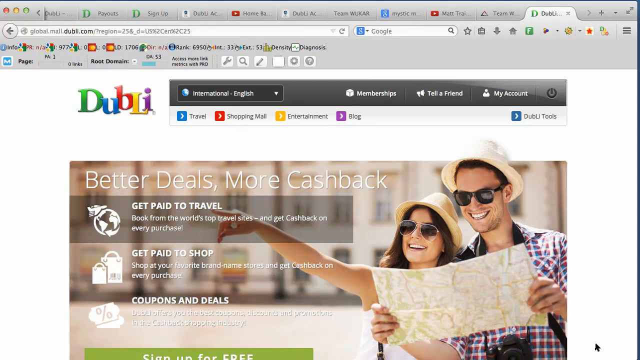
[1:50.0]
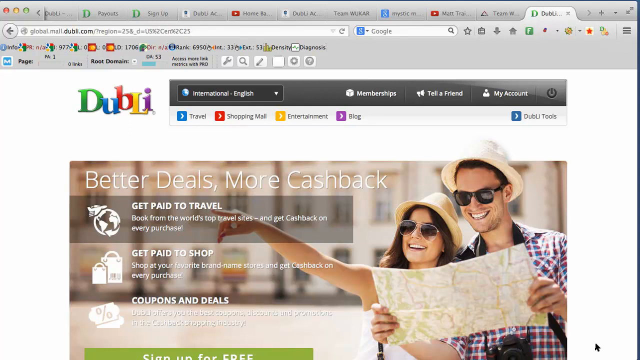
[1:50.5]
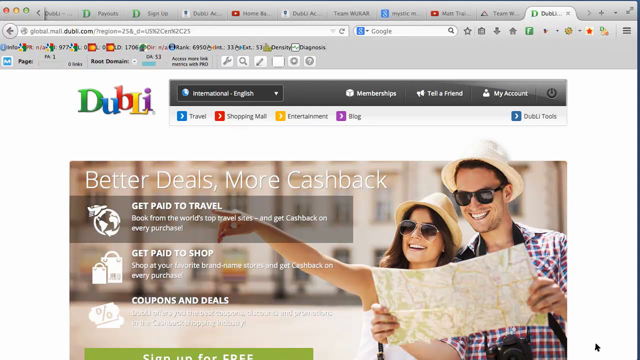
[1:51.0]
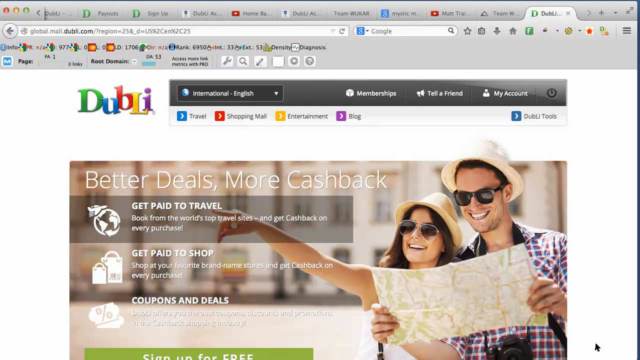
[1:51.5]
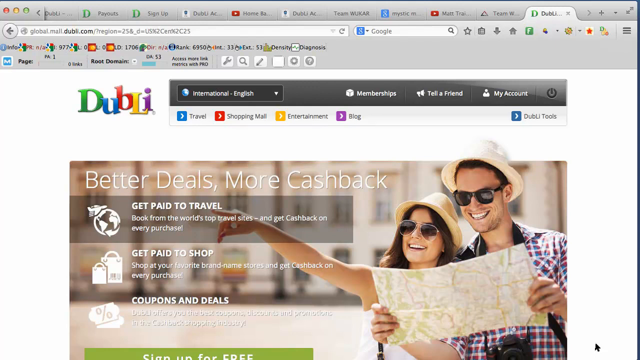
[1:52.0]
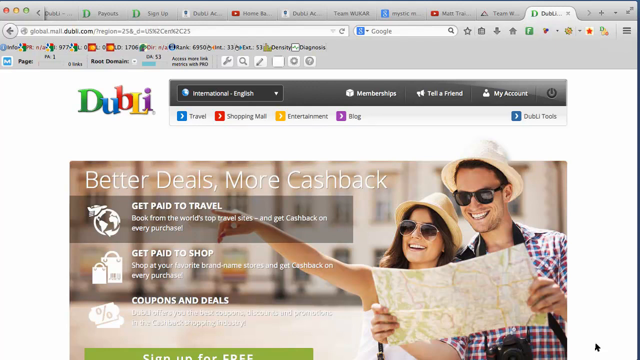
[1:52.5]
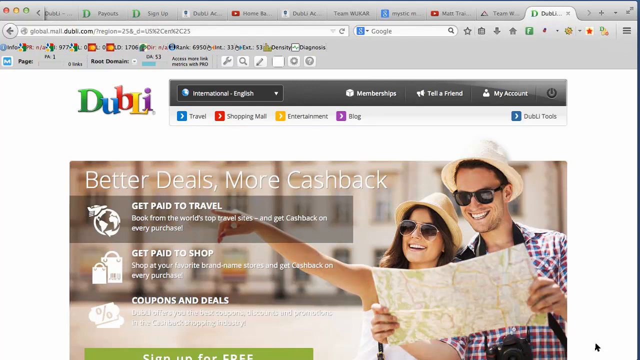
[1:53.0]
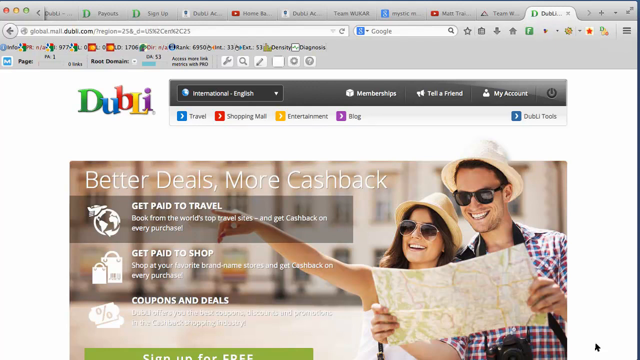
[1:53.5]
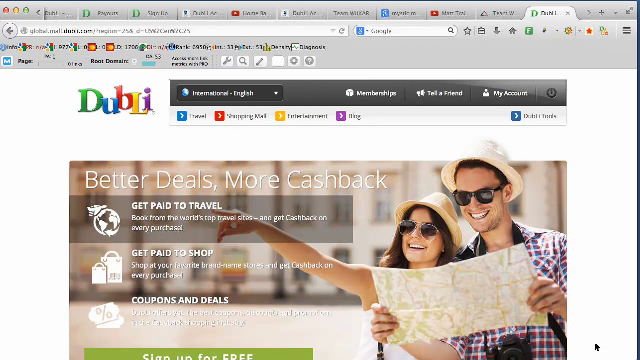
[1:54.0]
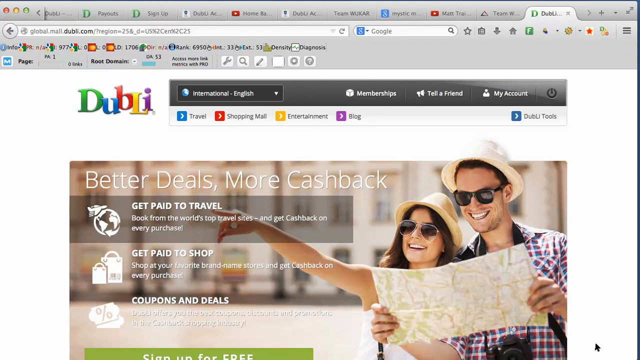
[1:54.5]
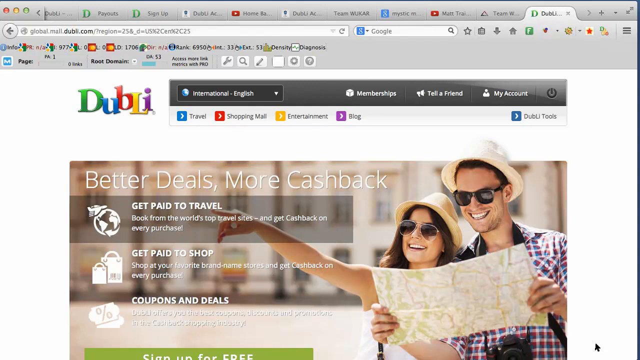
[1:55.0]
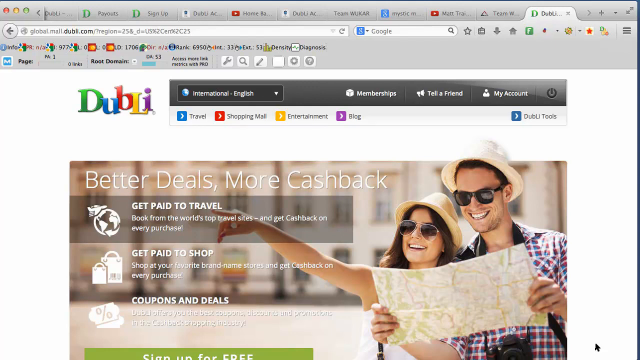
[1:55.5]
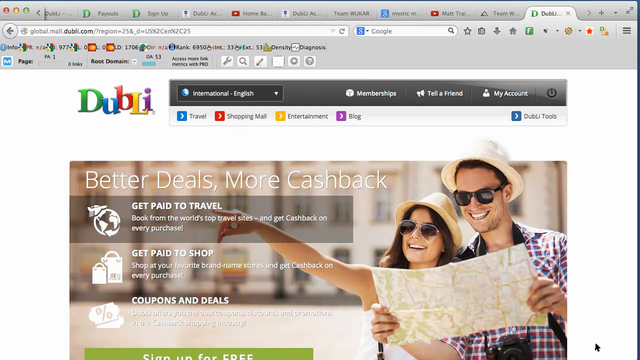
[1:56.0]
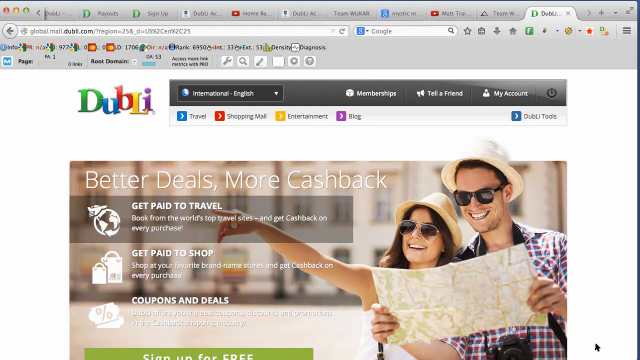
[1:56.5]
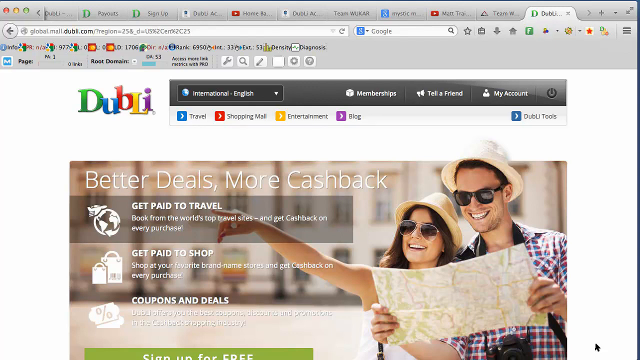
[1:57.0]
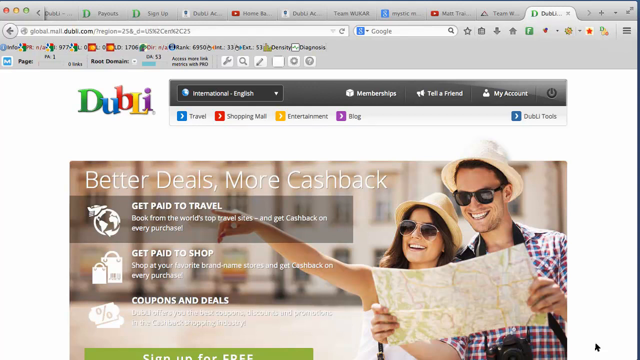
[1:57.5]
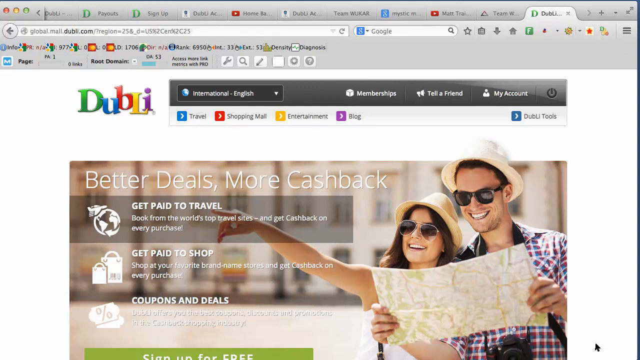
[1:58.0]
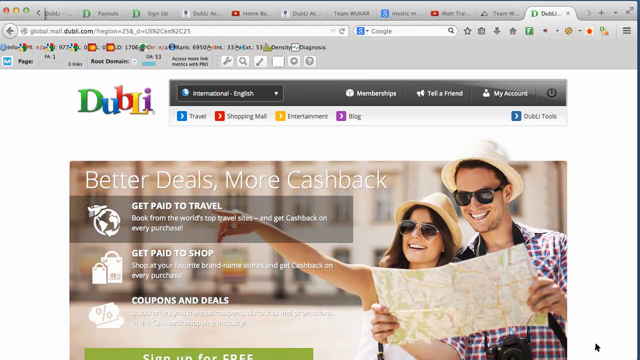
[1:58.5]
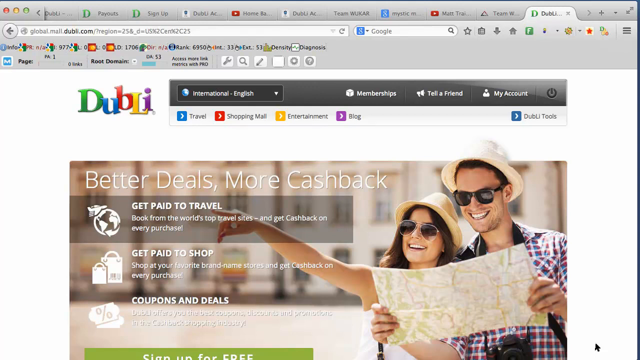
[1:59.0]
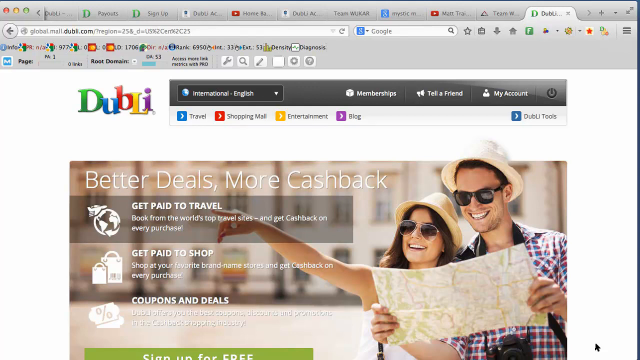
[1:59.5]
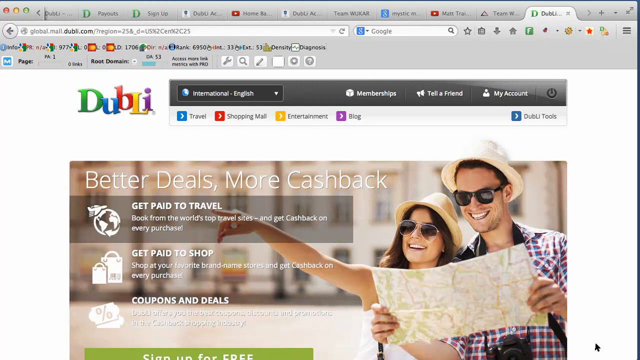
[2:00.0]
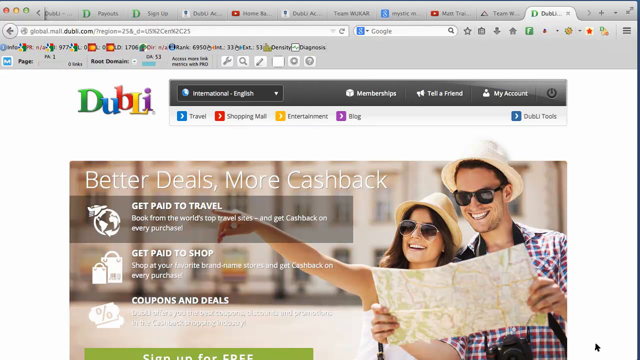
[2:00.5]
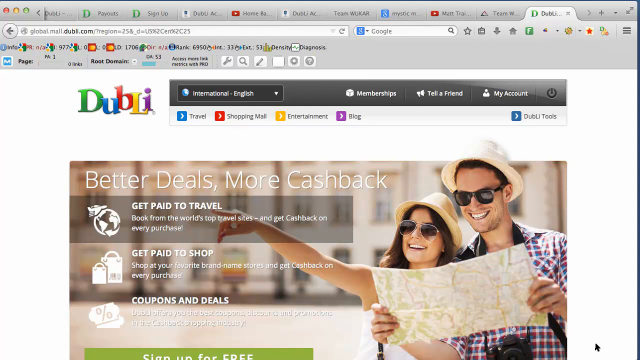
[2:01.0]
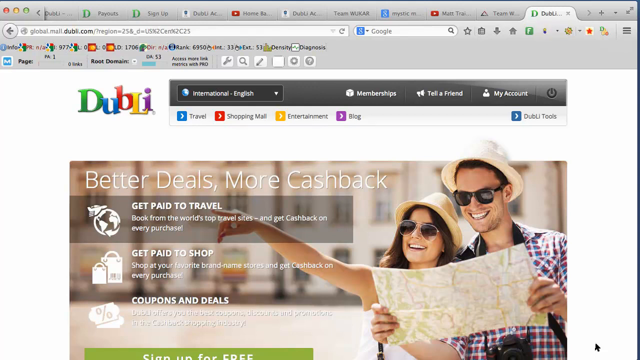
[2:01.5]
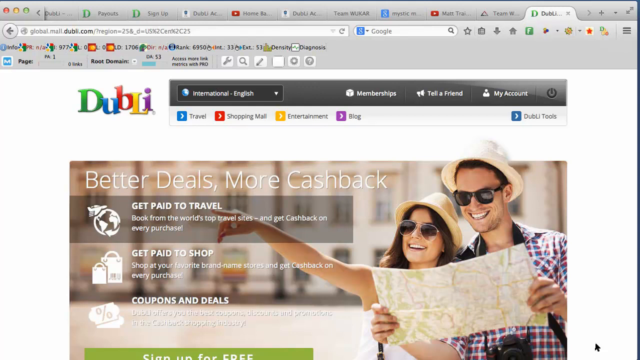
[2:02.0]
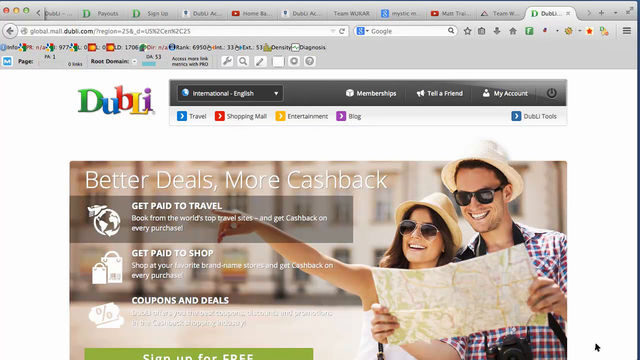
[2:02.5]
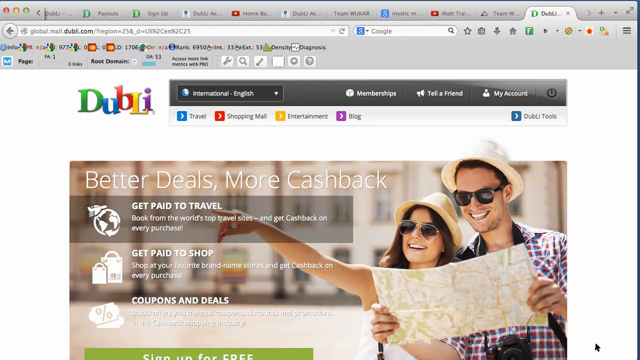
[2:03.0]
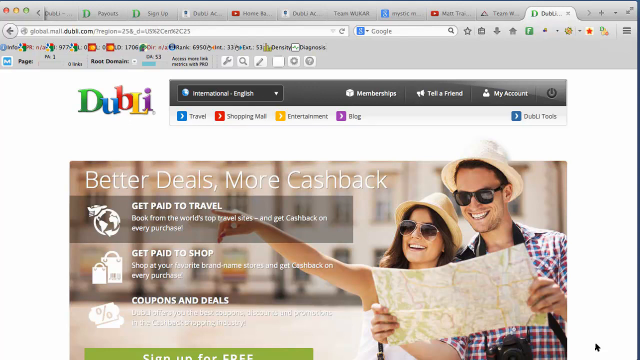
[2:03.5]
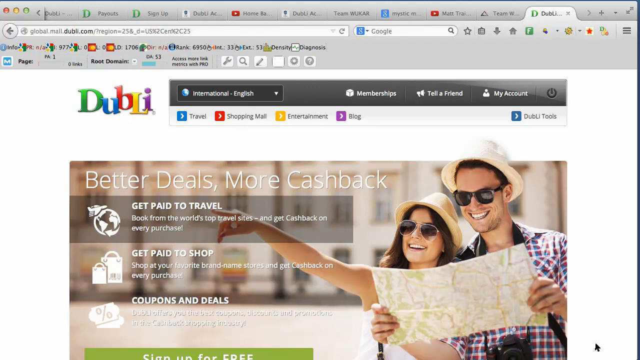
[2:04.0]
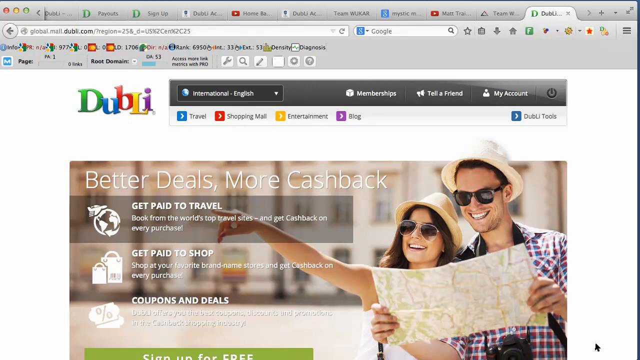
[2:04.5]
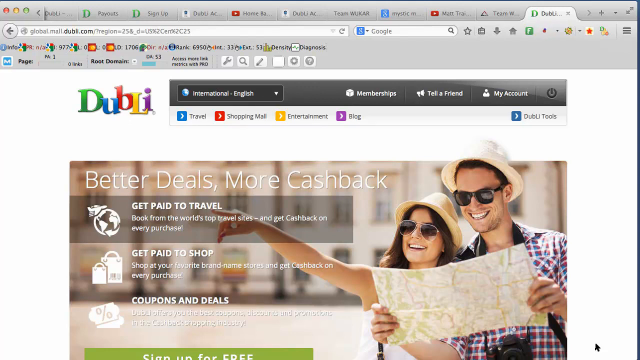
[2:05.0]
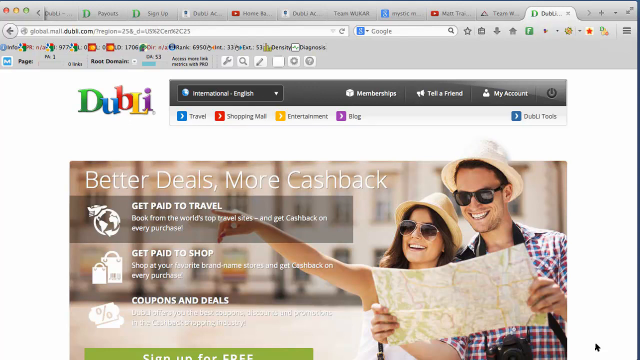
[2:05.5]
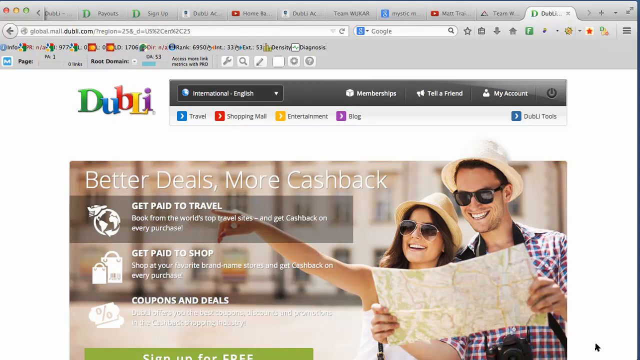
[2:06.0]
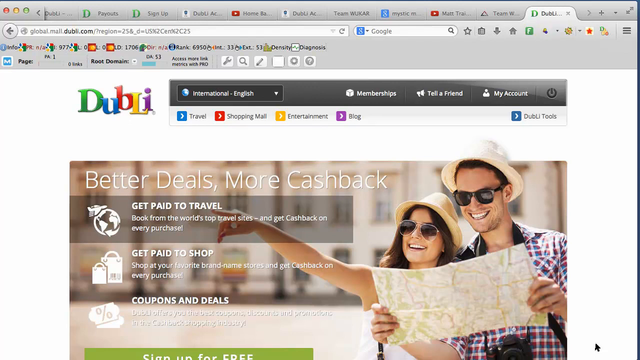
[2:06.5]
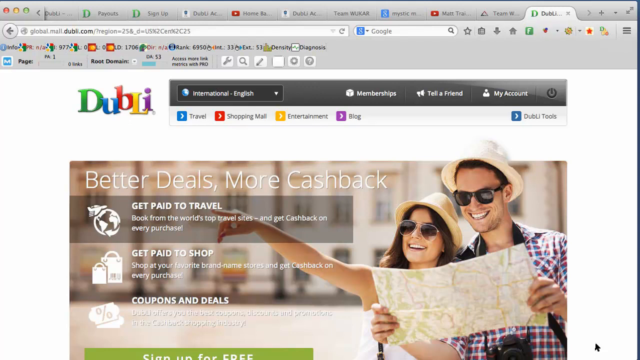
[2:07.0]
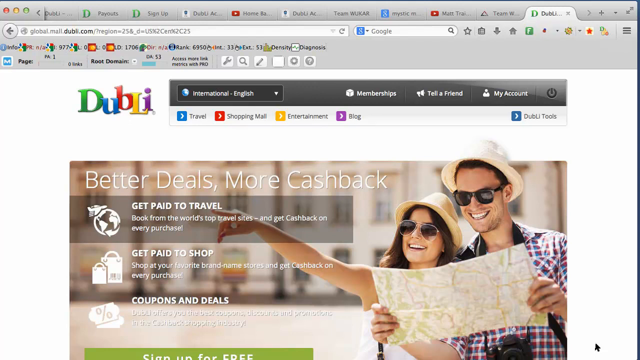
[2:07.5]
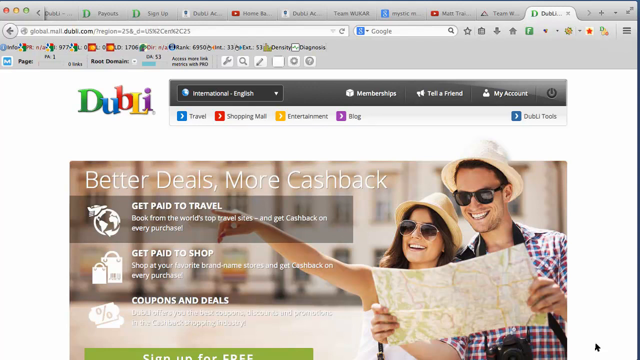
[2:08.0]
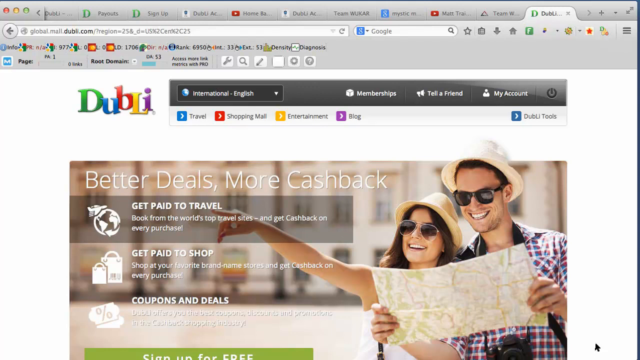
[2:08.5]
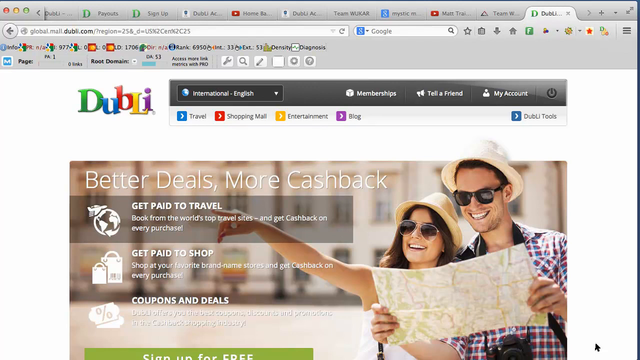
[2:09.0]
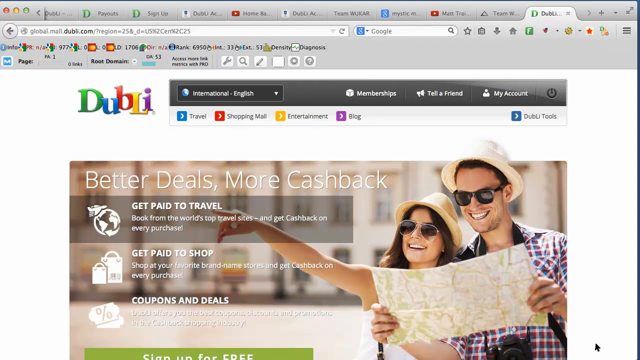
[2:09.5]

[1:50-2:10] The image of the couple remains on the right side of the video. The man is holding the map, and the woman points toward the left with her right pointer finger at something not identified. In the image to their left is text in white font; the largest, serving as the title, reads "better deals, more cash back." Other text reads "get paid to travel," "book from the world's top travel sites and get cash back on every purchase," "get paid to shop" and "shop at your favorite brand name," followed by a hard-to-see word that is possibly "stores," and "and get cash back on every purchase." There is also "coupons and deals," but the white font on the light background makes it very hard to see.